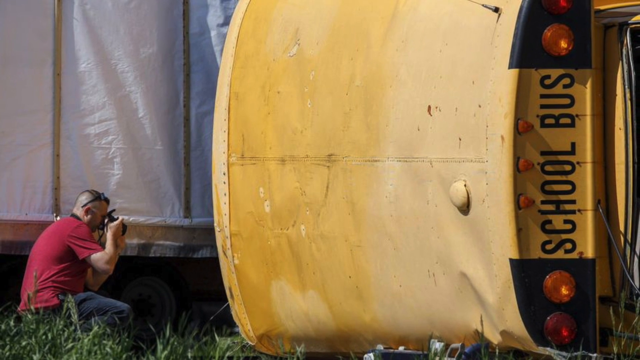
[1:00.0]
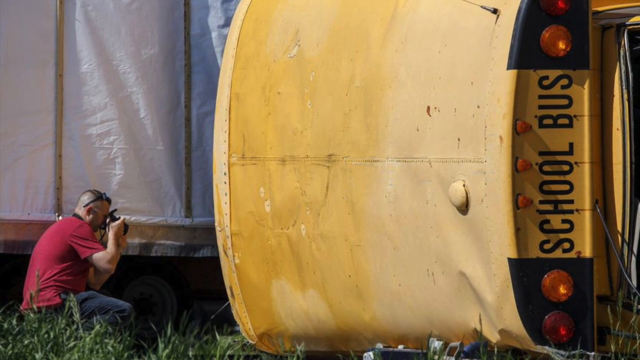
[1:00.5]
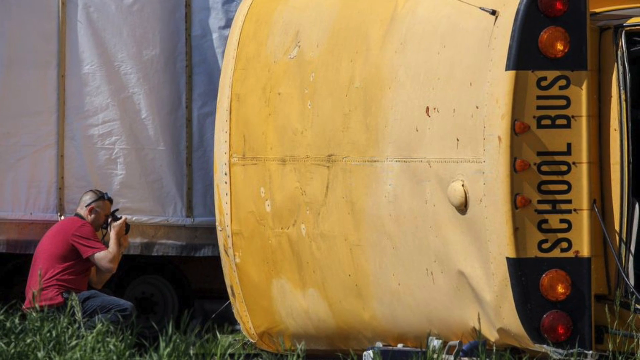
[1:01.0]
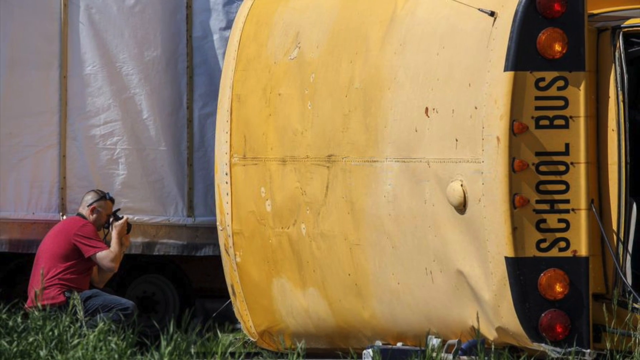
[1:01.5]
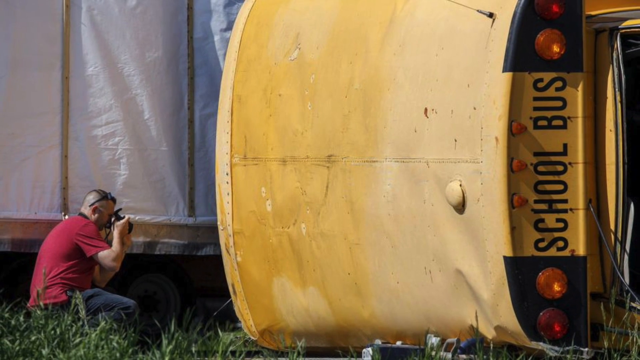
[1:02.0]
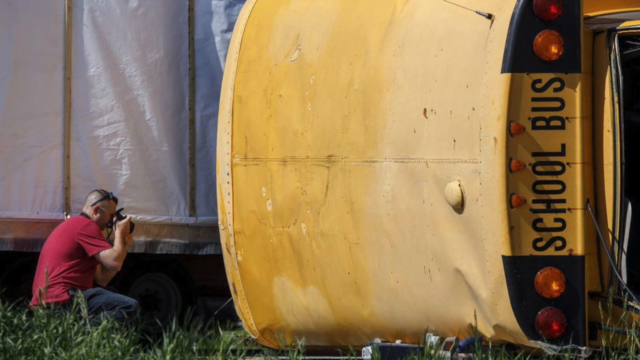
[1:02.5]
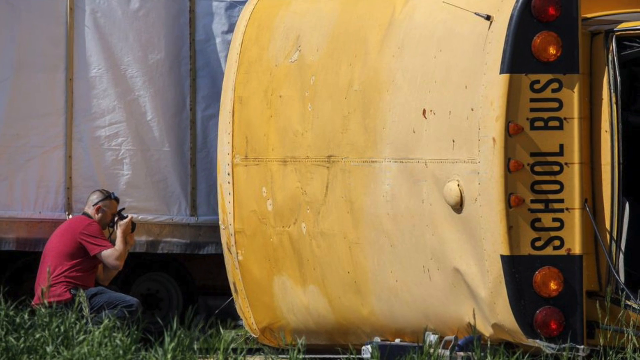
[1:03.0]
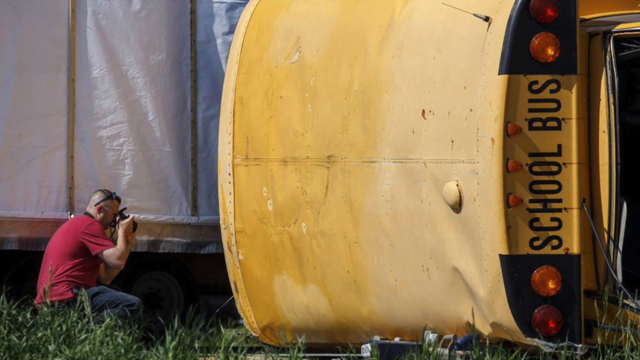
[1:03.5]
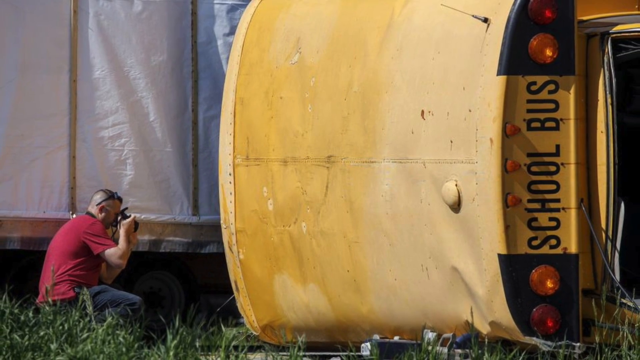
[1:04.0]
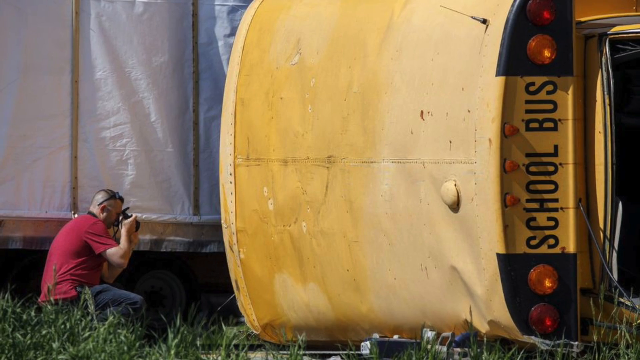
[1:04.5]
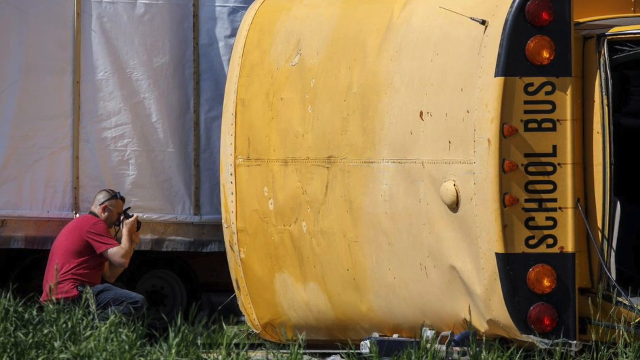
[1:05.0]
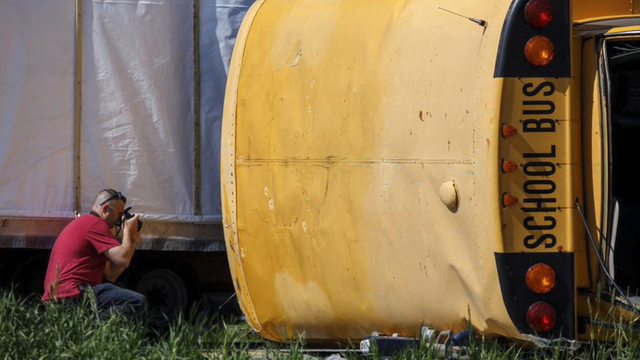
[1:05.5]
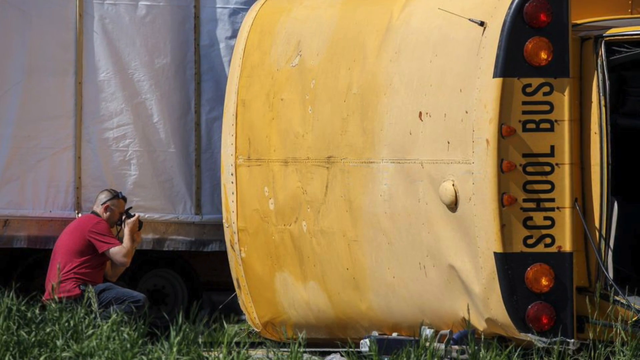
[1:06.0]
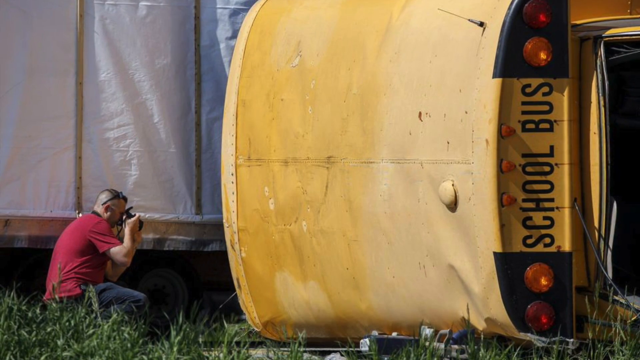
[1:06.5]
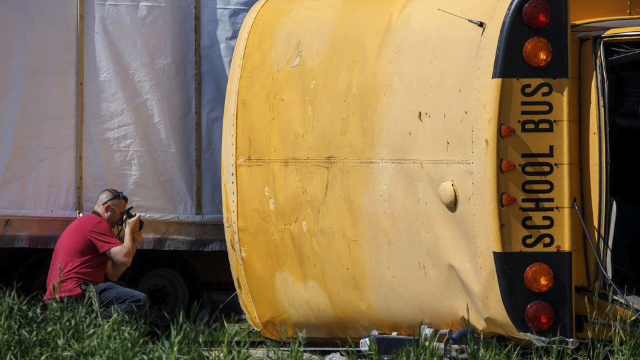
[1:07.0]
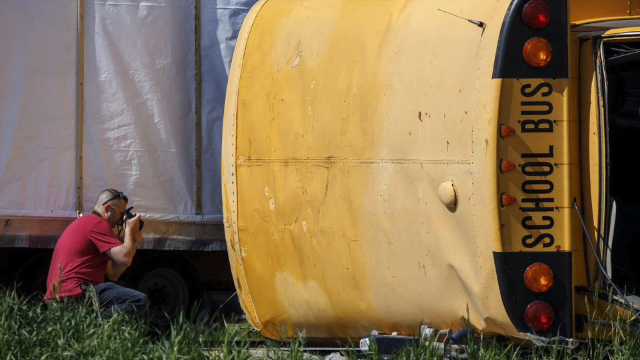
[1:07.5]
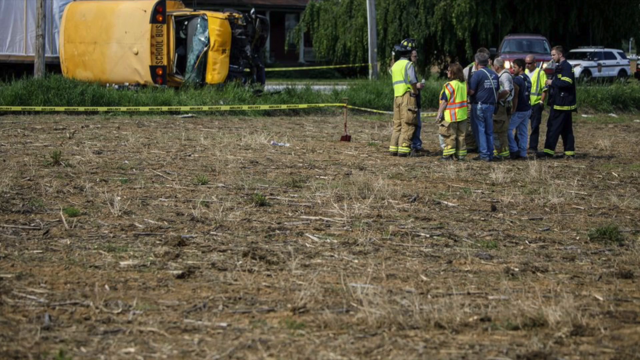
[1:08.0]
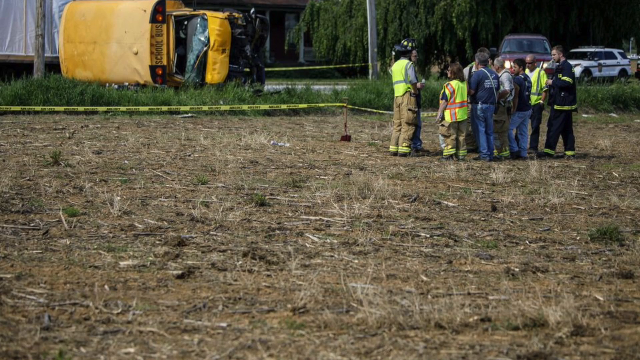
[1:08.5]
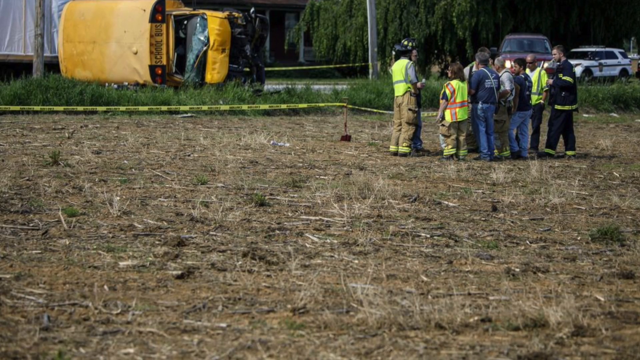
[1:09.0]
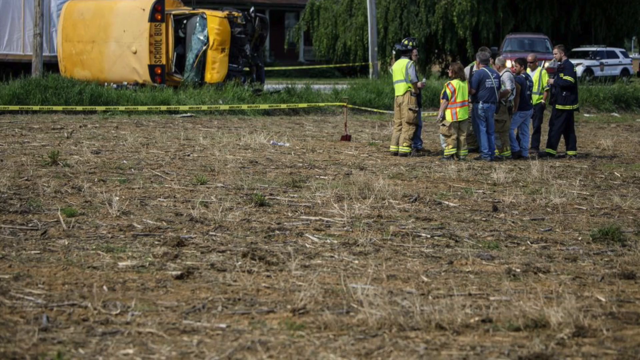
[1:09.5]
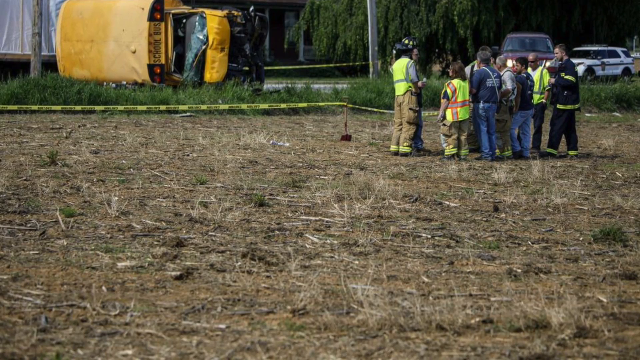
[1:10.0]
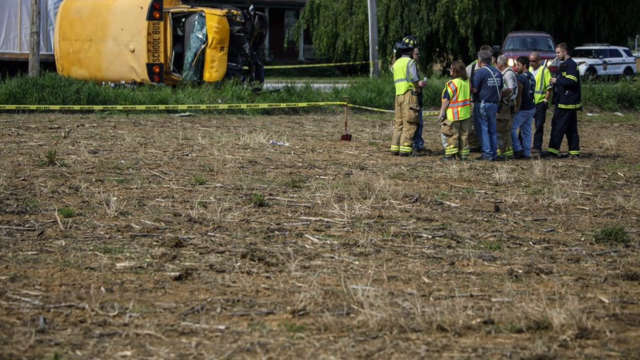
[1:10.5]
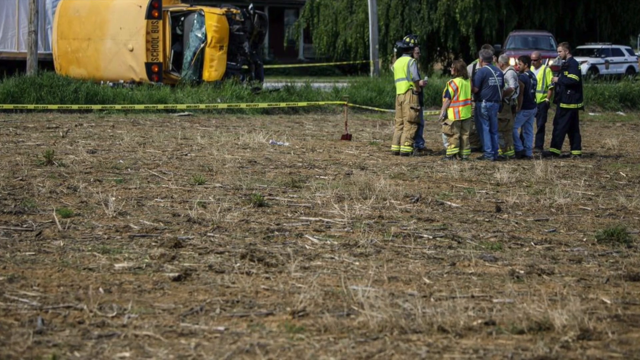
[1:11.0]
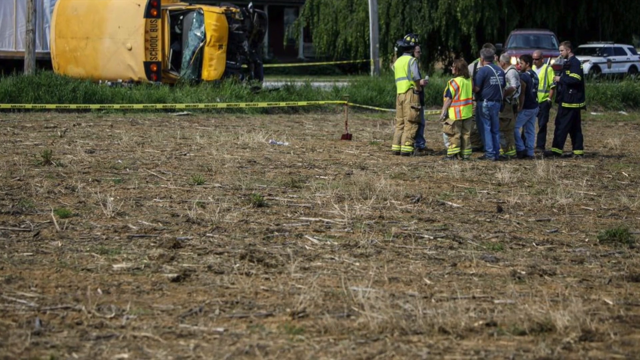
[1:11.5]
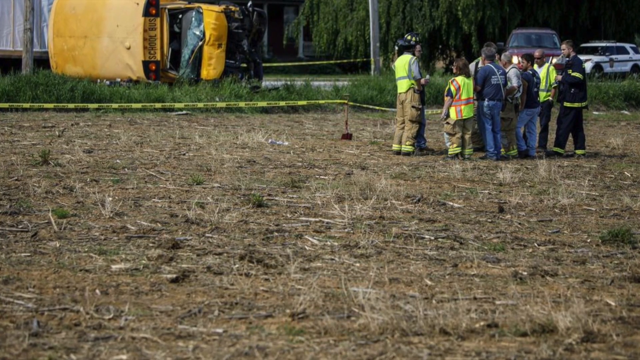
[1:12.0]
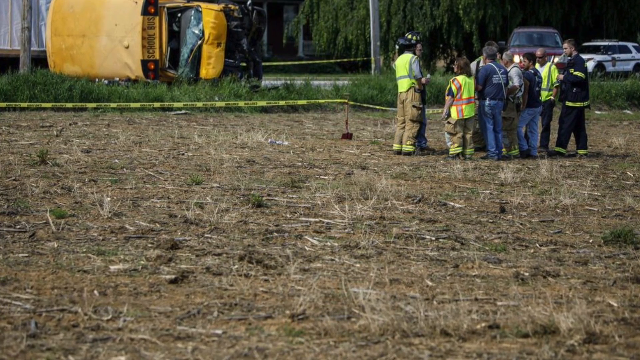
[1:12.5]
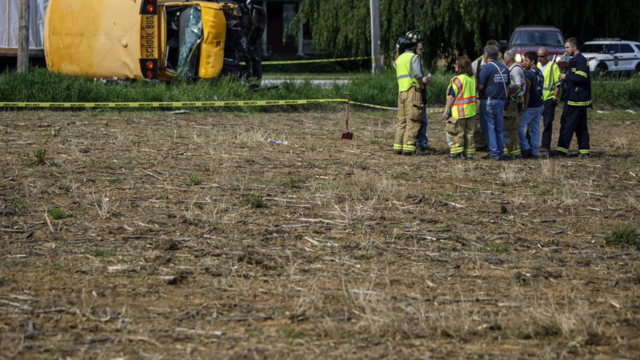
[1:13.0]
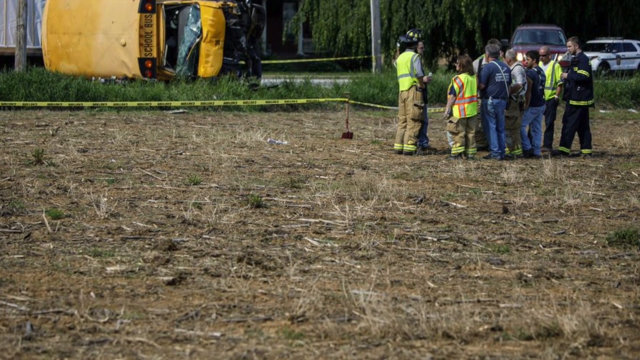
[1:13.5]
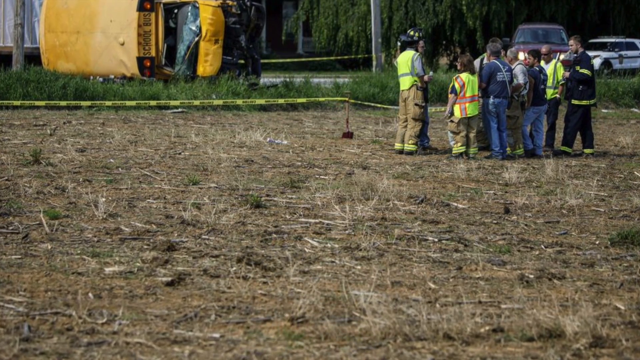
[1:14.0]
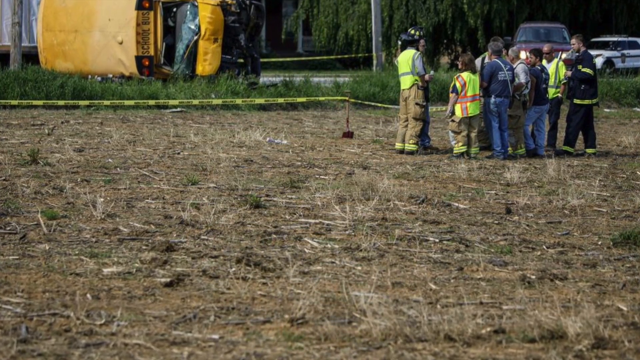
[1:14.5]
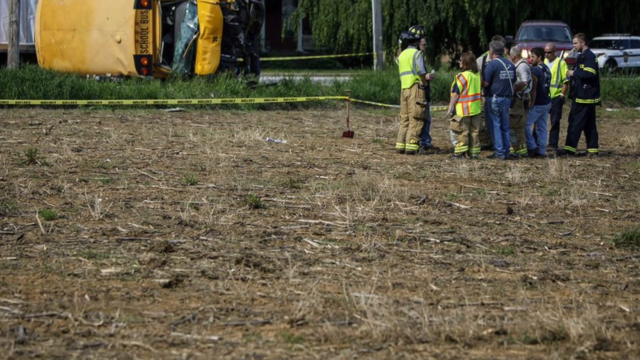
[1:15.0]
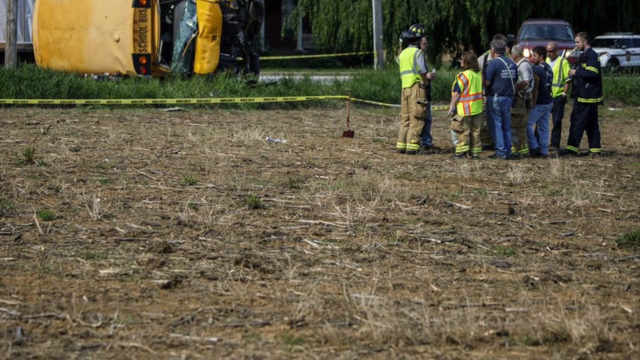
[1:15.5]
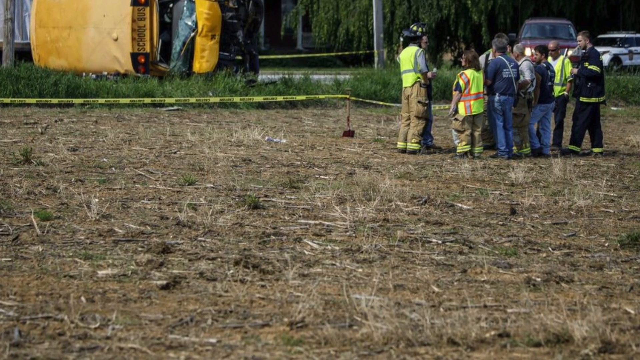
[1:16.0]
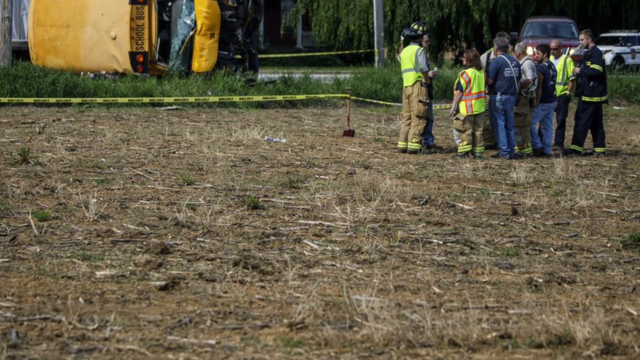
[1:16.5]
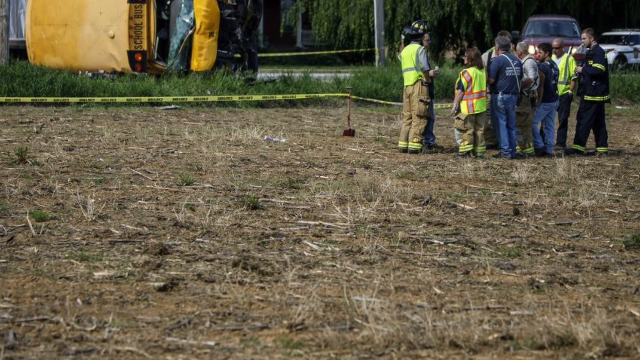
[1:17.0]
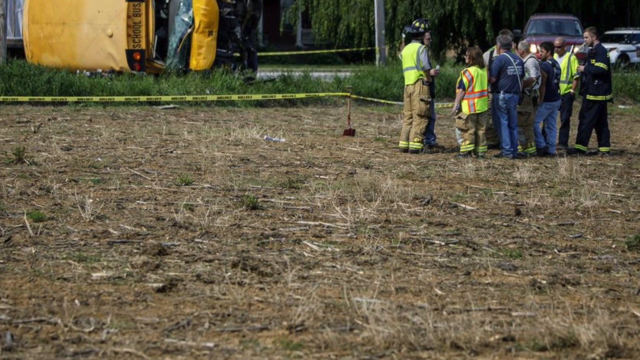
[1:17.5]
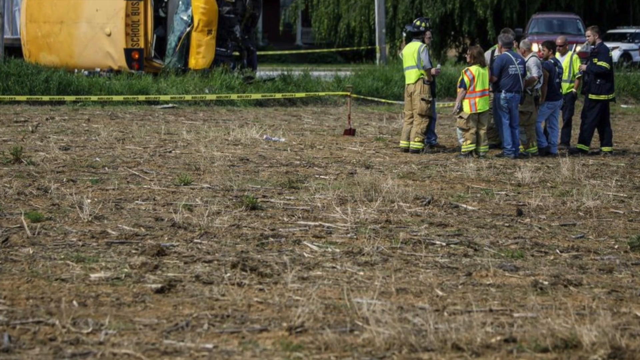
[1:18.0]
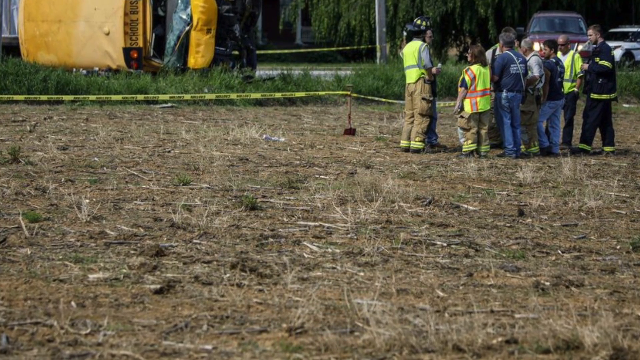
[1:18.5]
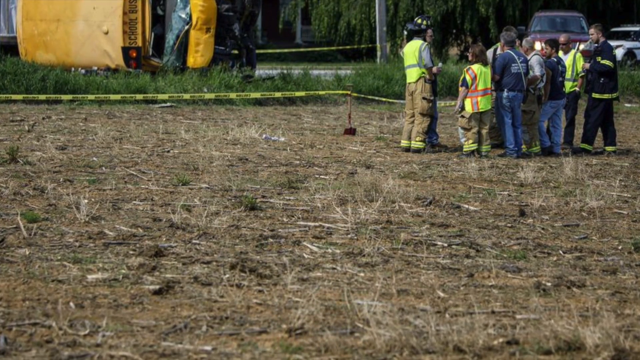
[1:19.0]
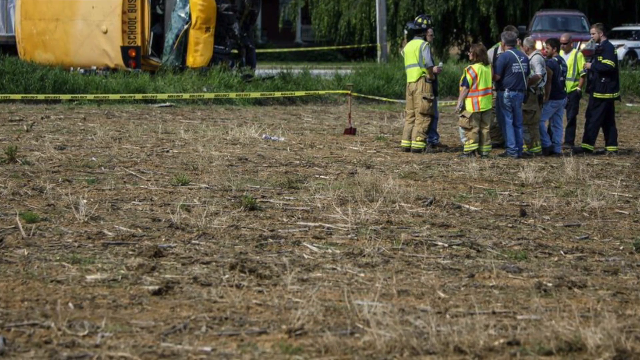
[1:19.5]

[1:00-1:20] The man in the red shirt, with a marine haircut and glasses on top of his head, kneels down taking pictures of the overturned school bus. The scene cuts to a field nearby where a lot of people, most wearing some type of high-visibility work vest, are standing, with the overturned school bus on the left and a police car on the right. The view pans toward them to the center and starts to tighten in on one of the people.